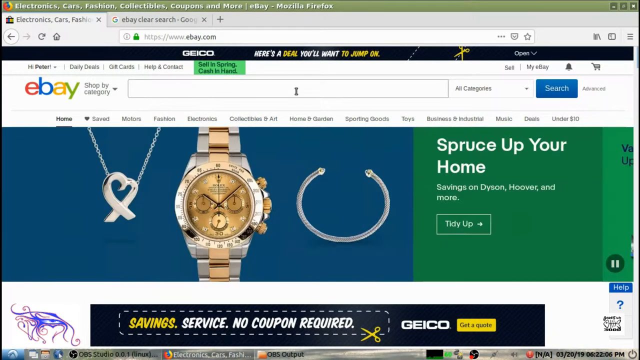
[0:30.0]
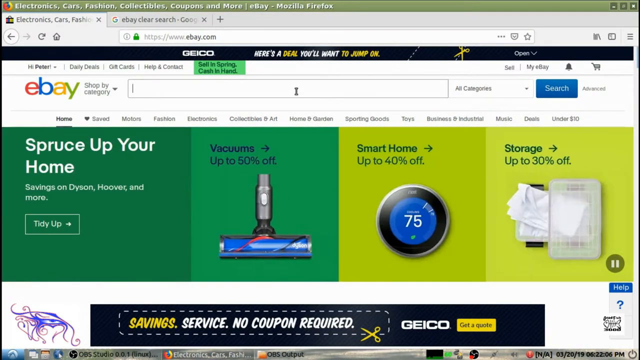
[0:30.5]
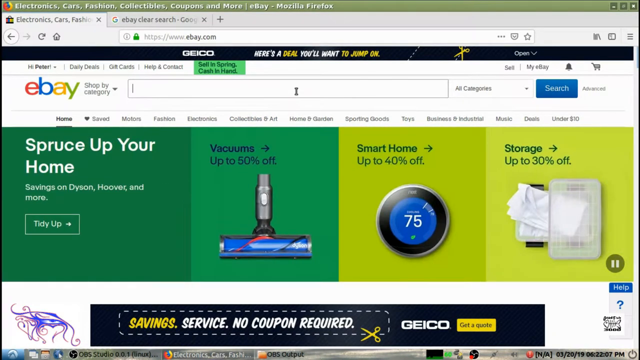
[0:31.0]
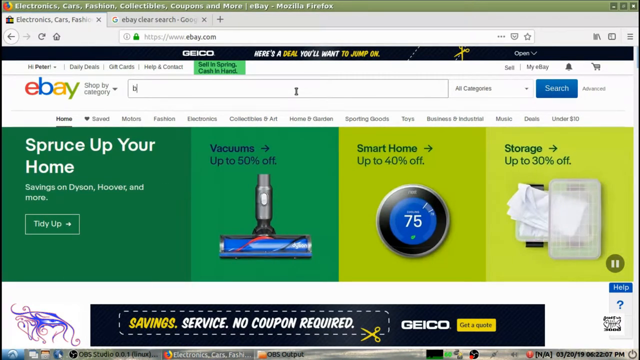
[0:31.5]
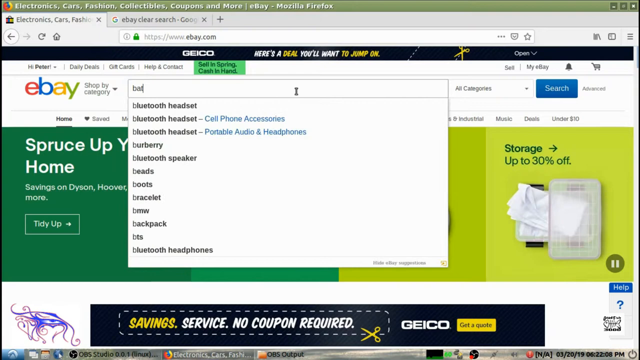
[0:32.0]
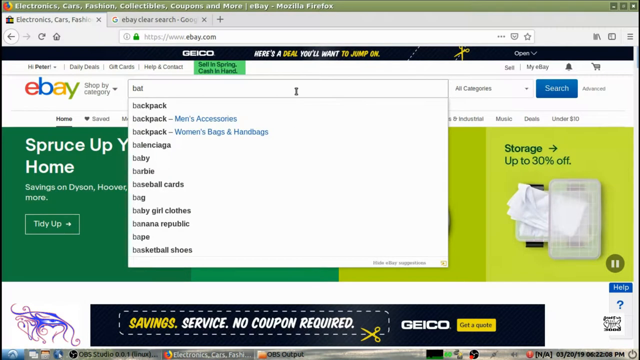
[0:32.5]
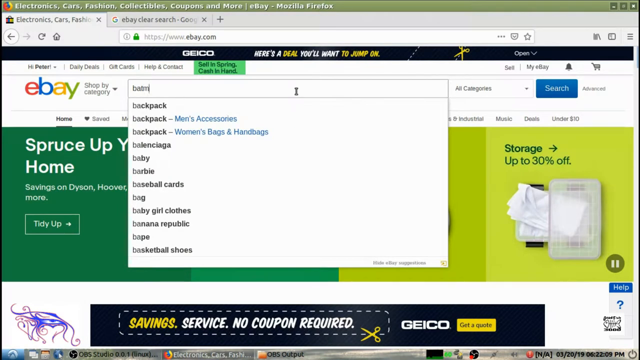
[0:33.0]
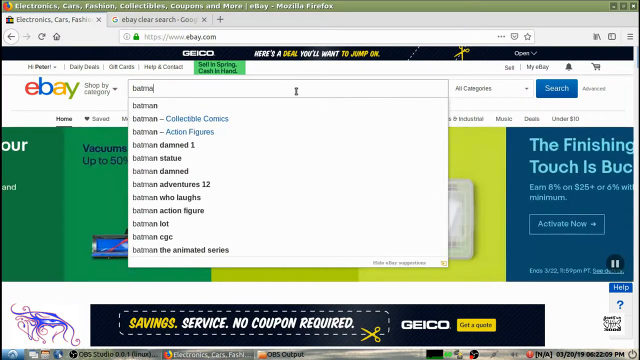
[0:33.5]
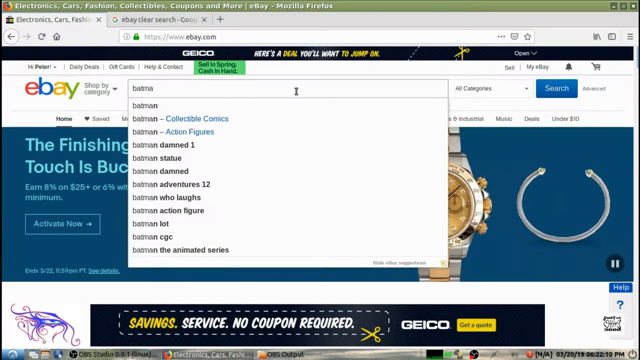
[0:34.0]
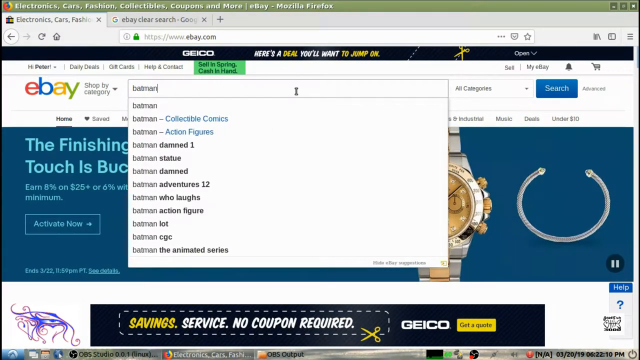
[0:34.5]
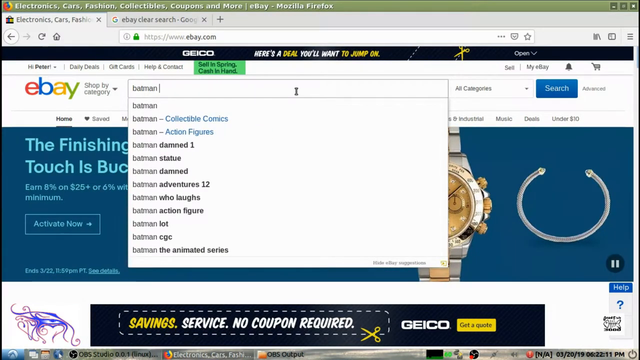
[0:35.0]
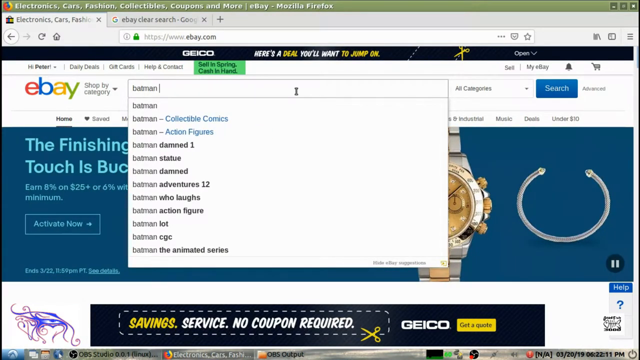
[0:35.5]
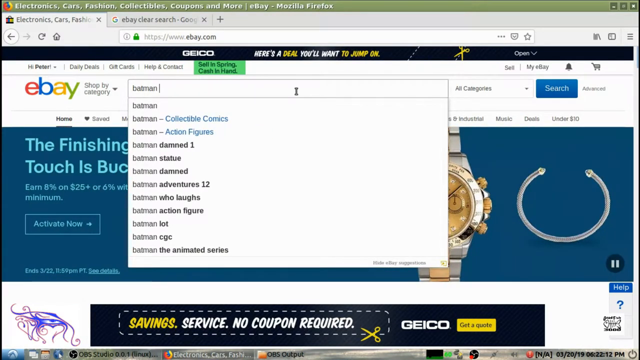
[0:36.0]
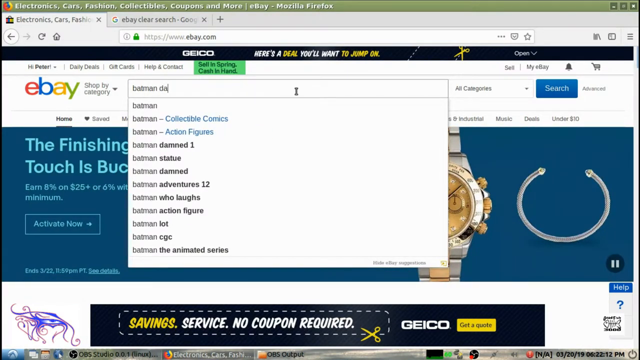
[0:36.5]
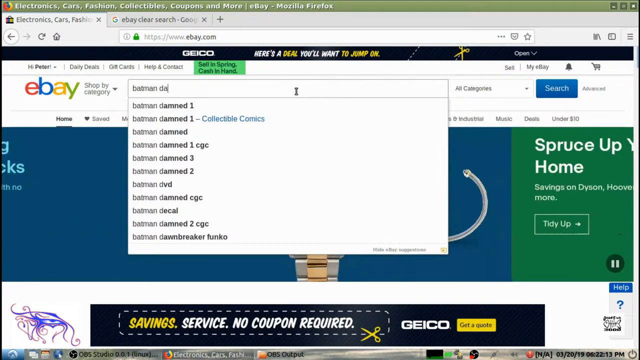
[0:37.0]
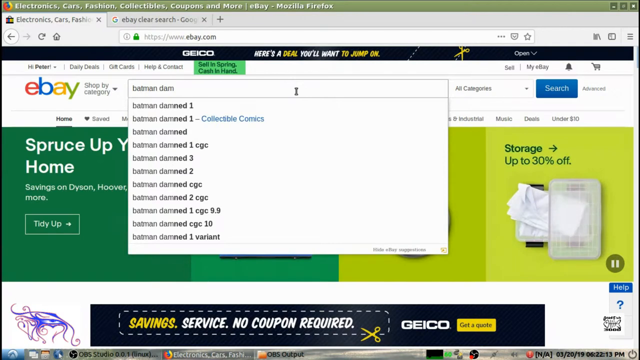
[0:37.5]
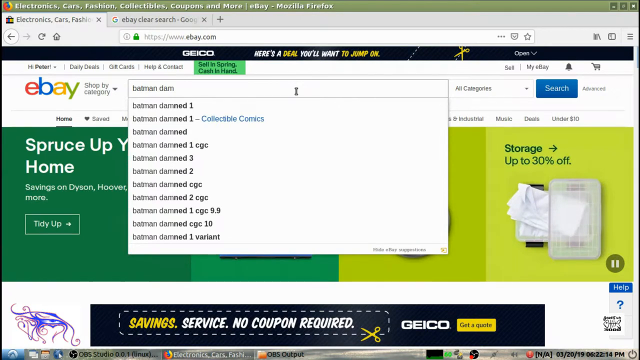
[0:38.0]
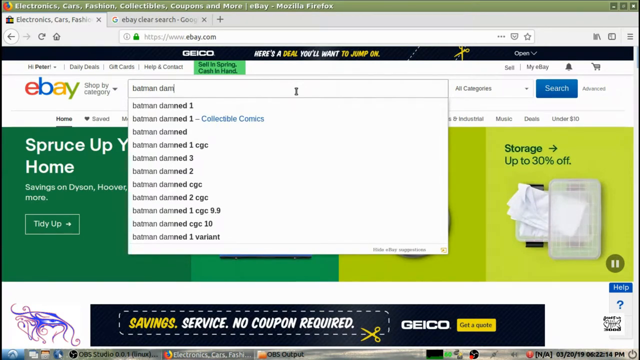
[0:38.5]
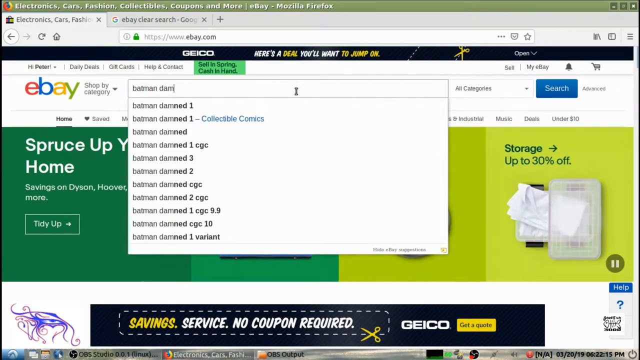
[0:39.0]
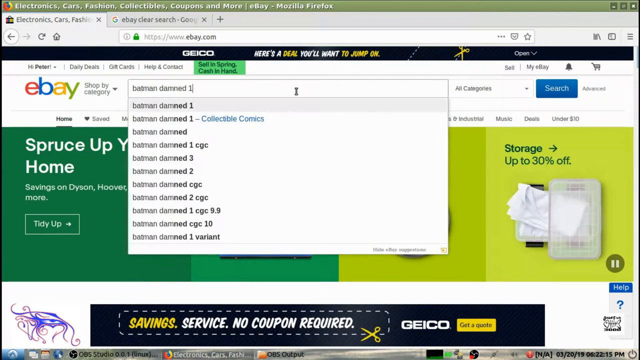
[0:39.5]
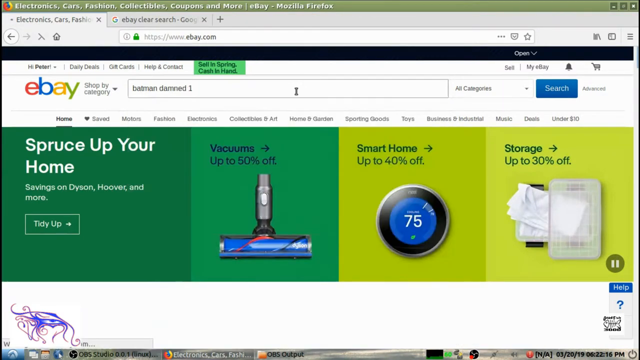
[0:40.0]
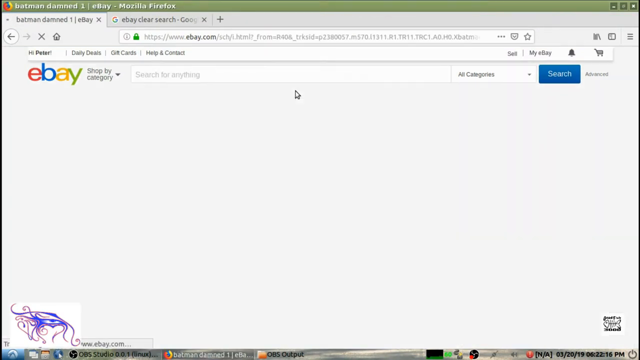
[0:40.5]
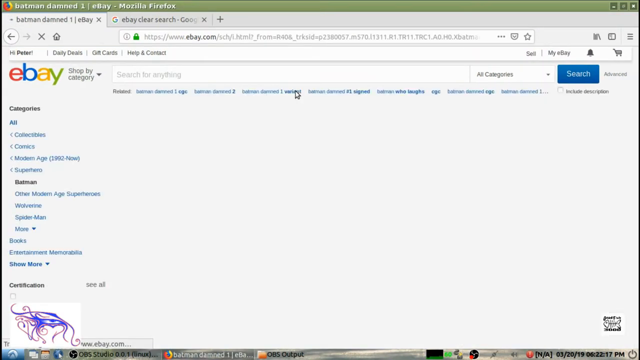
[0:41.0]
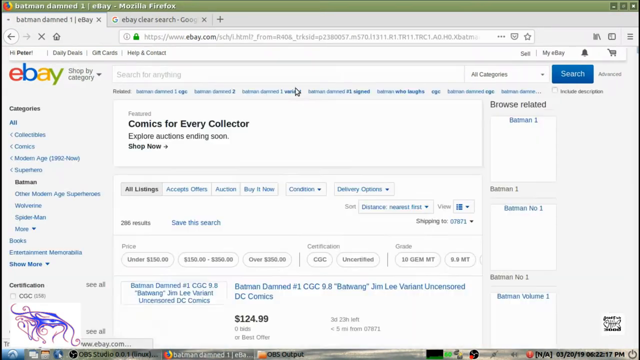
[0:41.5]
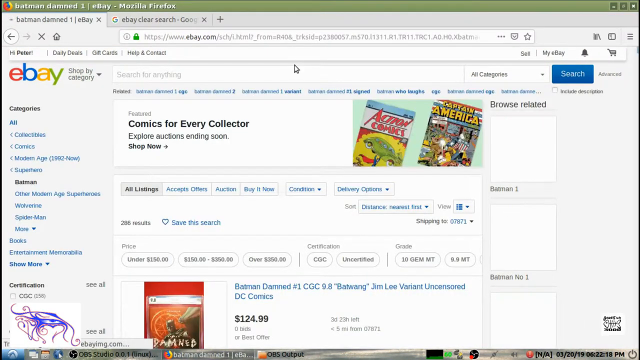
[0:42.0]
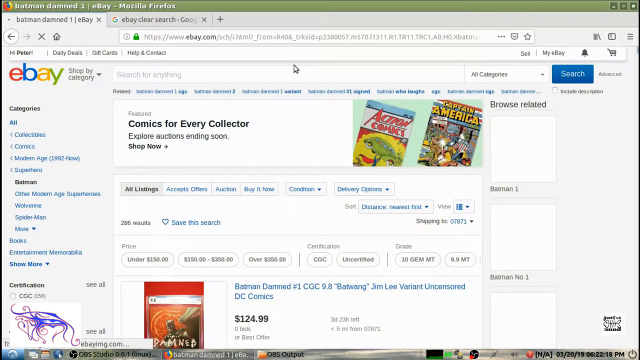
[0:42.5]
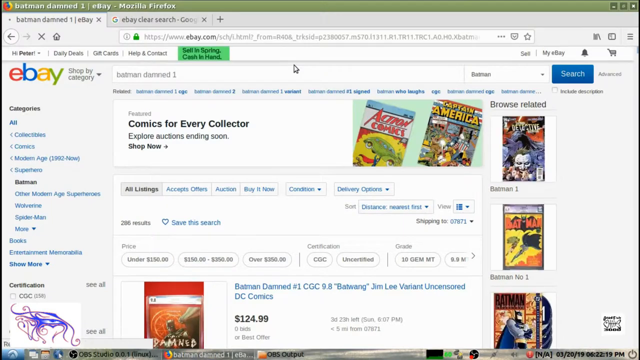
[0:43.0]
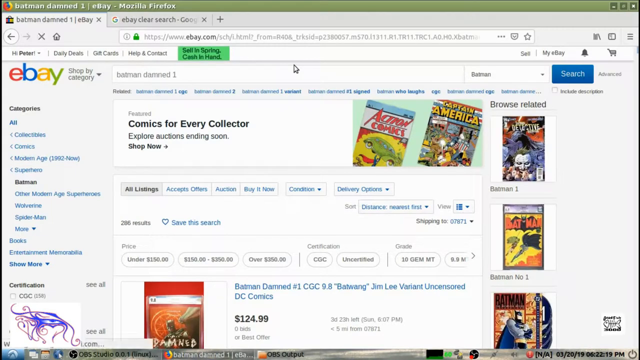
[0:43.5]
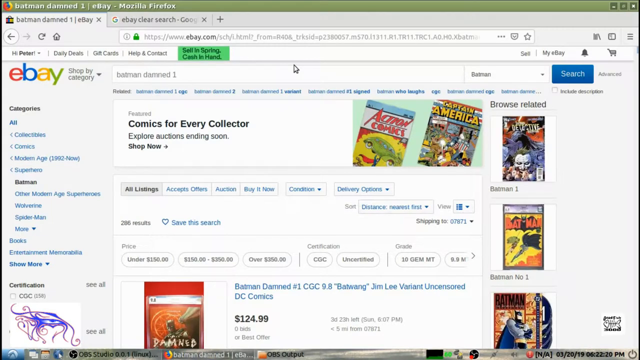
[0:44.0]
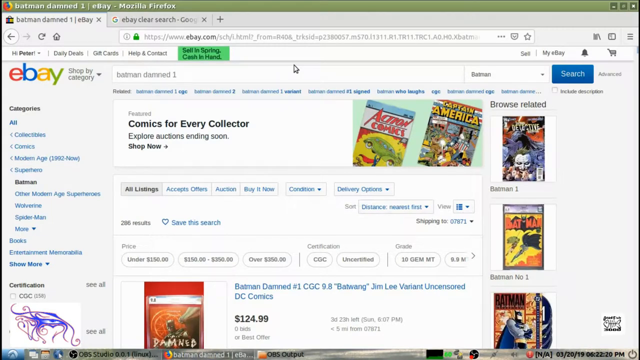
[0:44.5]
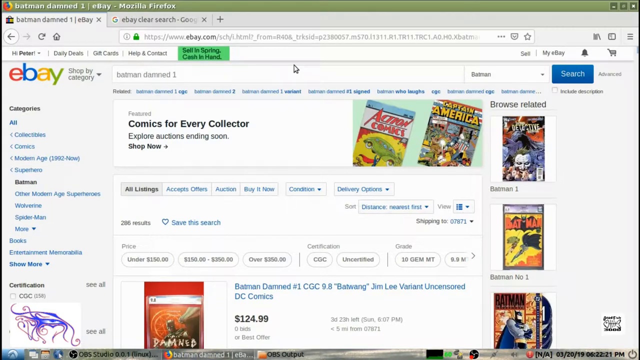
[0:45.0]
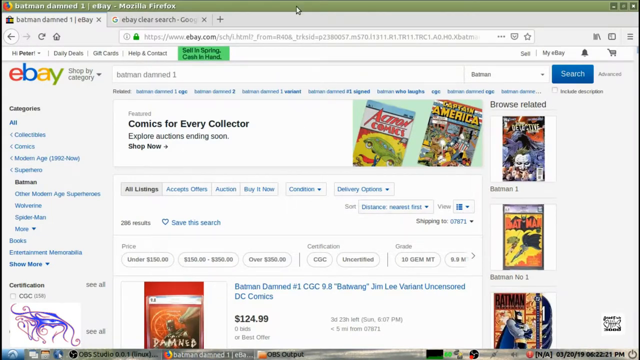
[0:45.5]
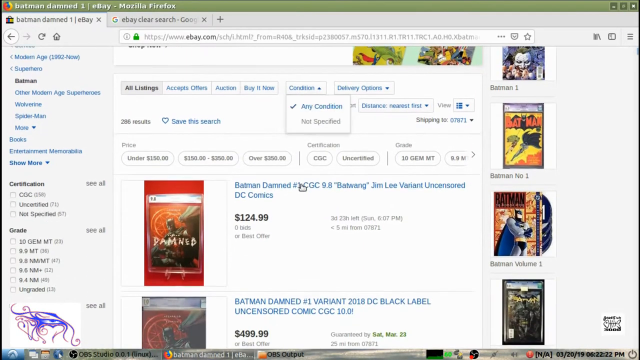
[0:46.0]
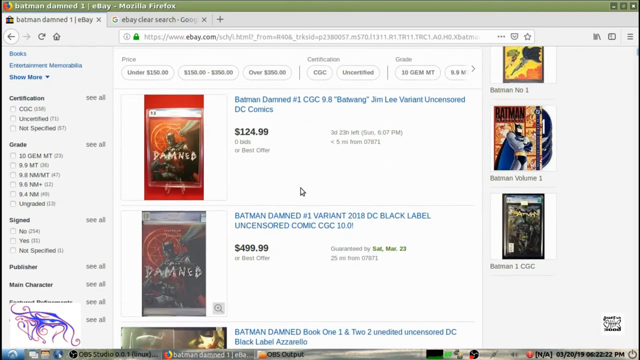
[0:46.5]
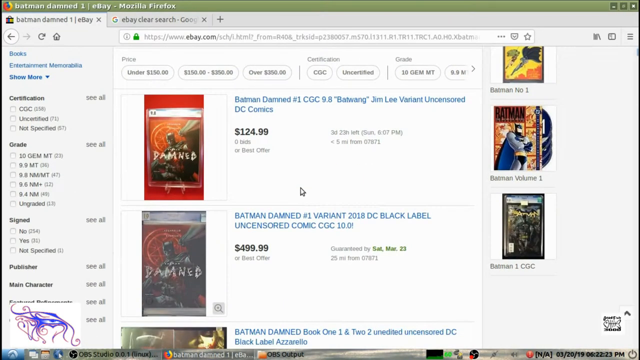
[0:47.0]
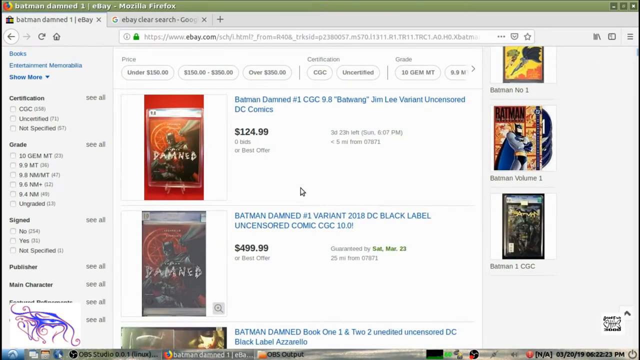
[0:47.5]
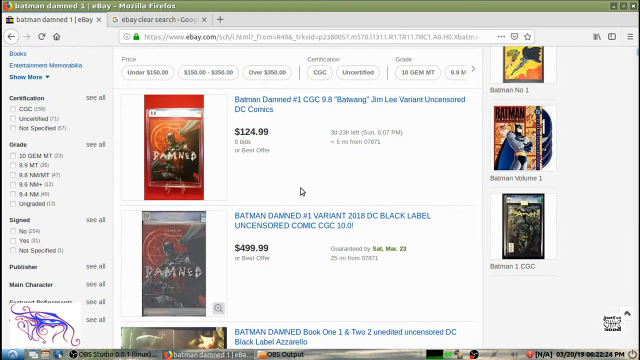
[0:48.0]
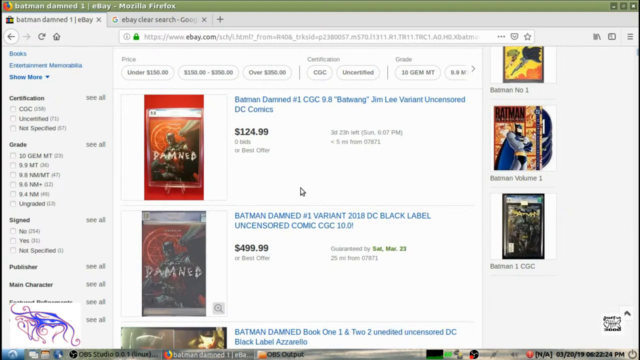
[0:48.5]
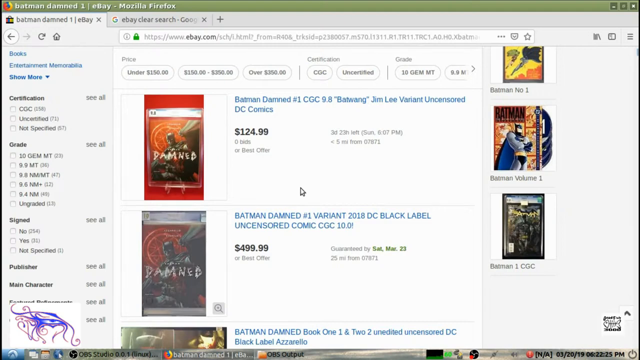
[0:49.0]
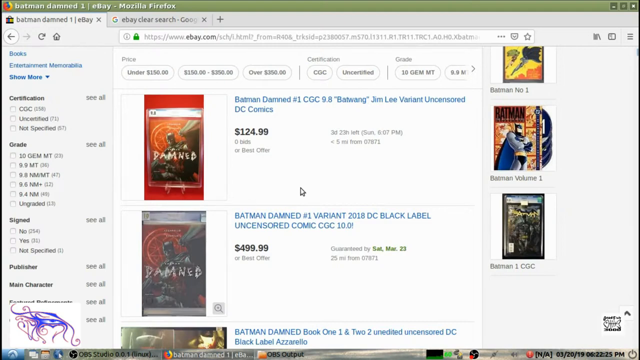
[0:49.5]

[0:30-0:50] The user moves the cursor around and types into eBay's search input box at the top, entering "Batman Damned 1," then clicks search. Comic books appear: one comic book at the bottom and a vertical list of three comic books on the right side. The banner area at the top says "Comics for Every Creator," and to the right of the banner are two very old comic books, one of Action Comics and one of Captain America. The user starts scrolling down to the comic books that were searched for. The first result is $124.99 and is available; the second result is $499.99 and is unavailable.